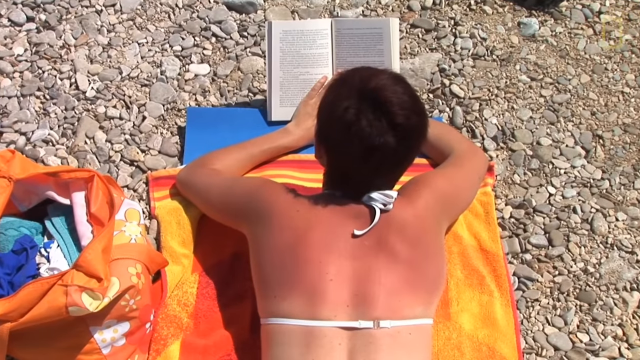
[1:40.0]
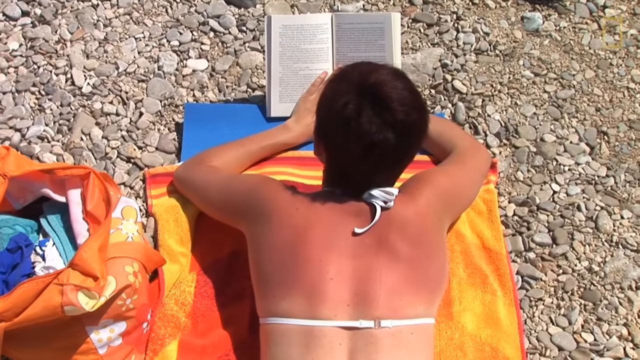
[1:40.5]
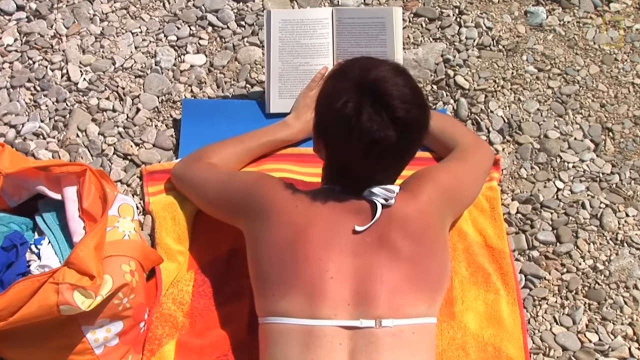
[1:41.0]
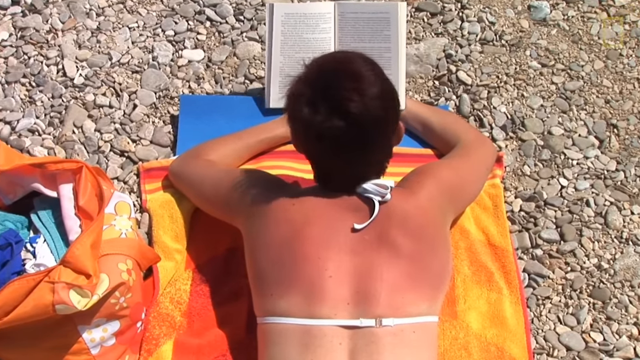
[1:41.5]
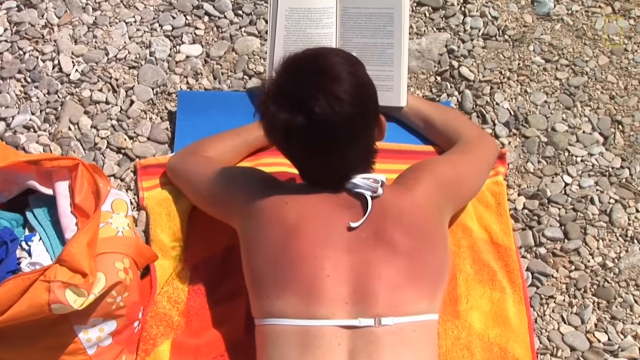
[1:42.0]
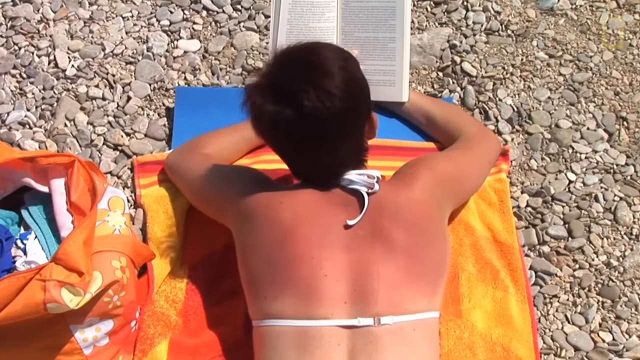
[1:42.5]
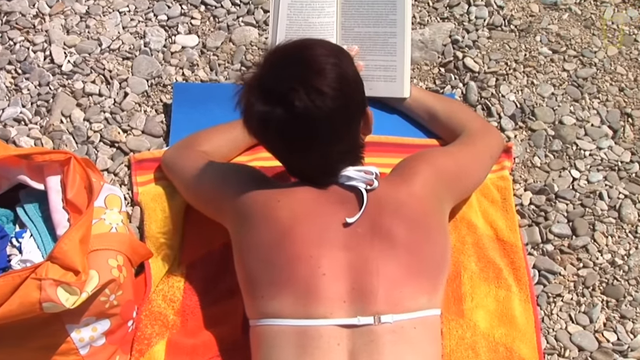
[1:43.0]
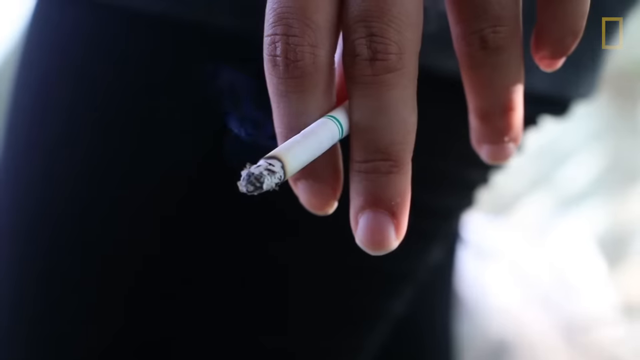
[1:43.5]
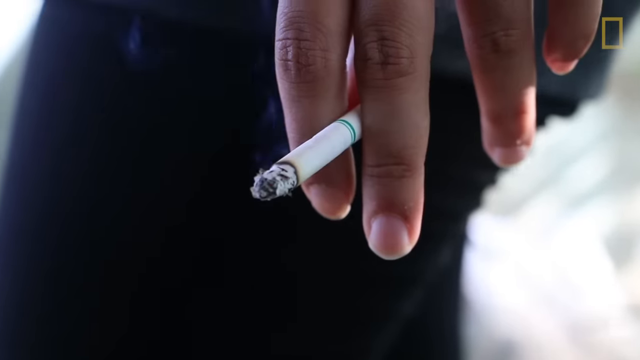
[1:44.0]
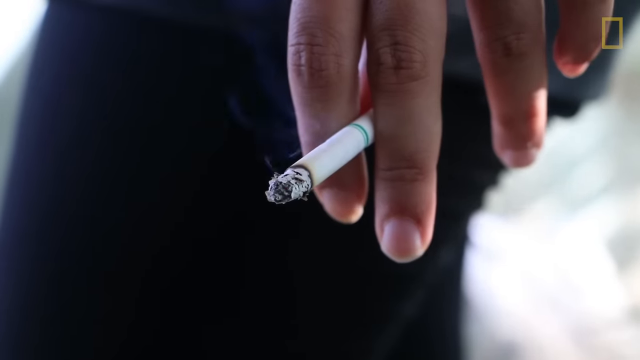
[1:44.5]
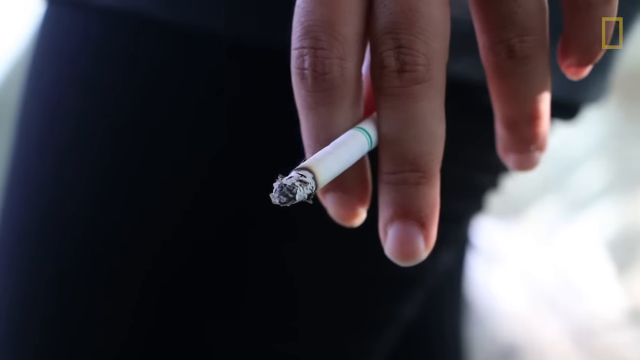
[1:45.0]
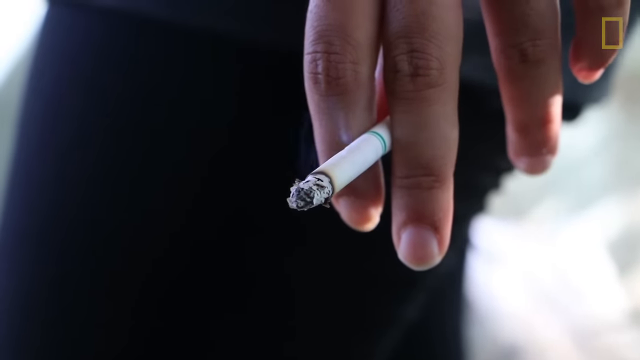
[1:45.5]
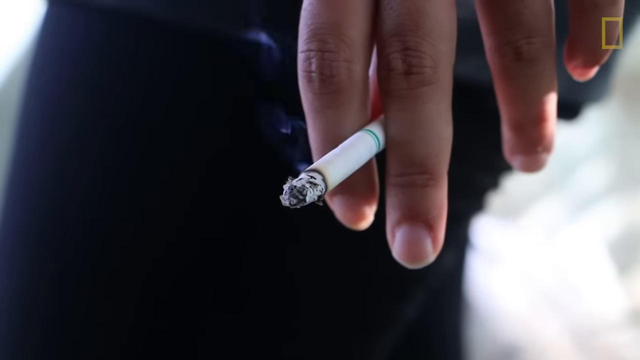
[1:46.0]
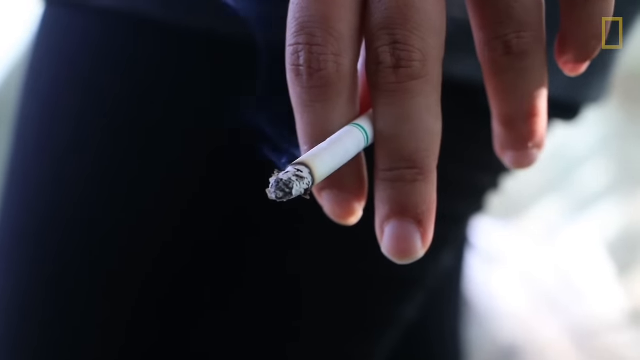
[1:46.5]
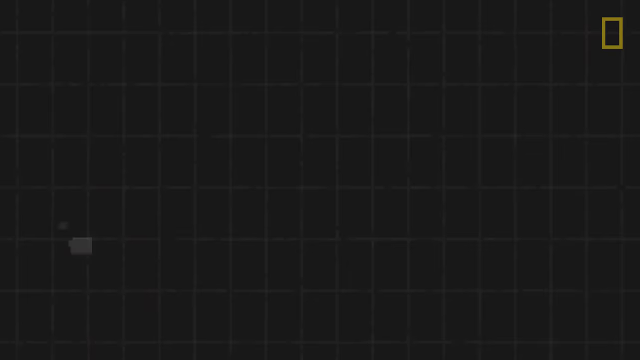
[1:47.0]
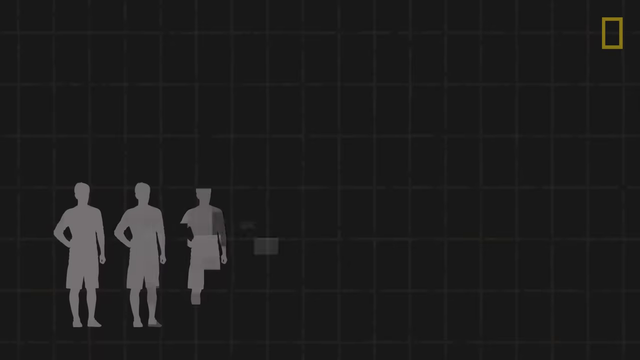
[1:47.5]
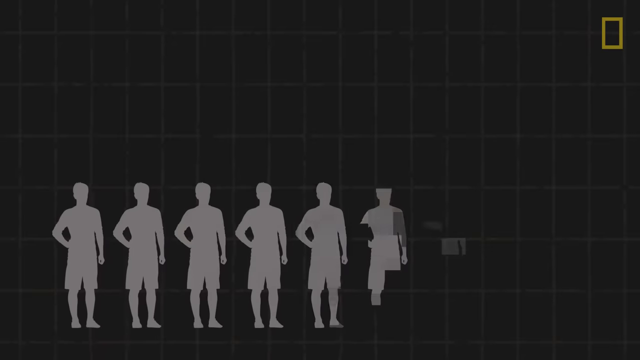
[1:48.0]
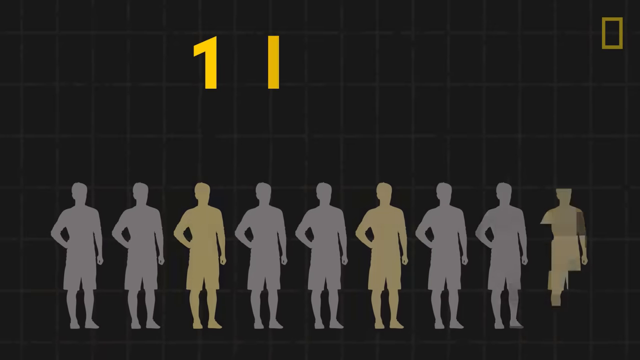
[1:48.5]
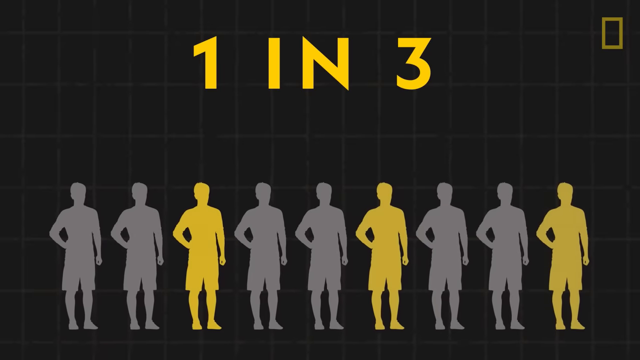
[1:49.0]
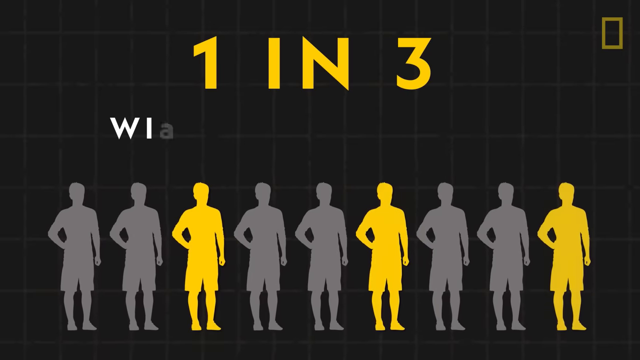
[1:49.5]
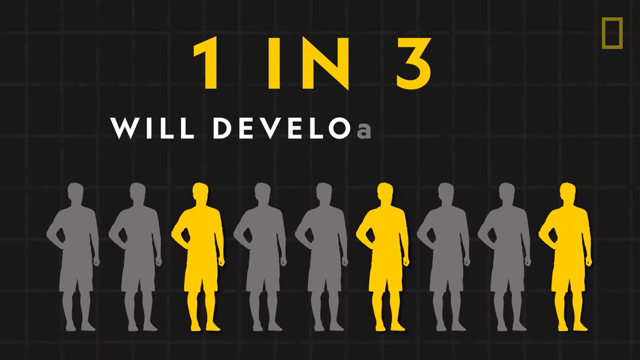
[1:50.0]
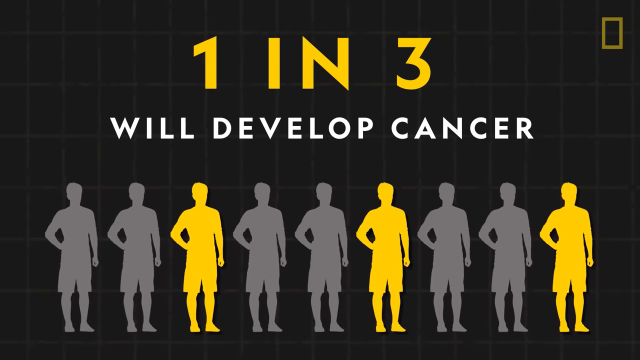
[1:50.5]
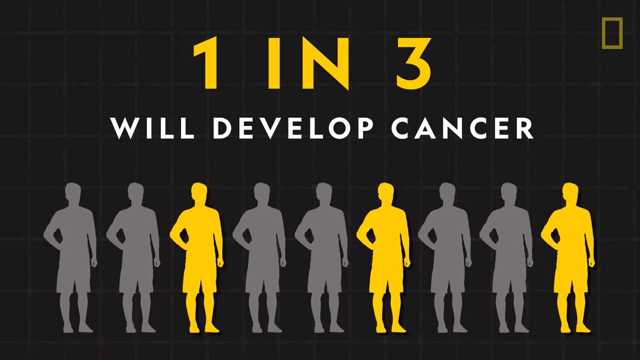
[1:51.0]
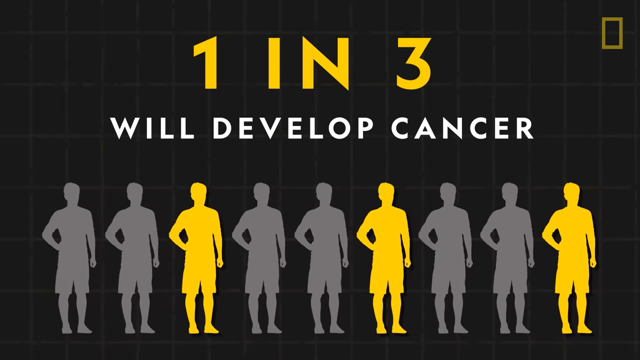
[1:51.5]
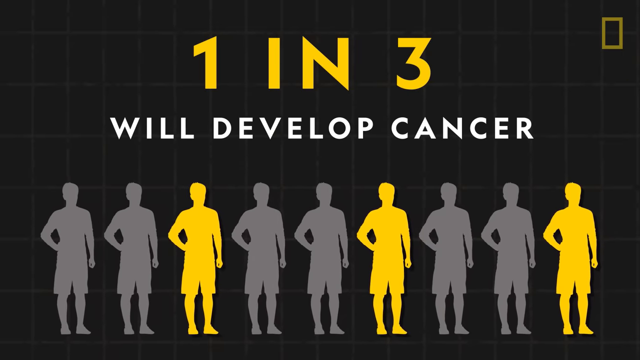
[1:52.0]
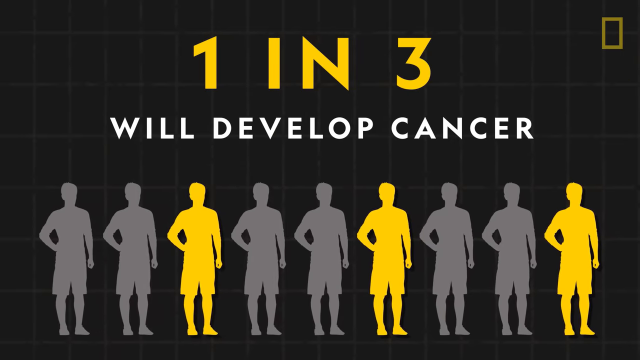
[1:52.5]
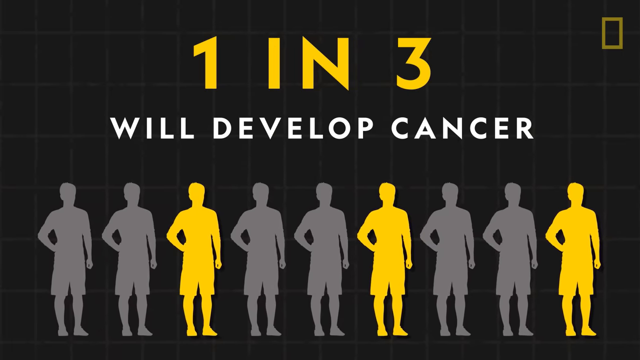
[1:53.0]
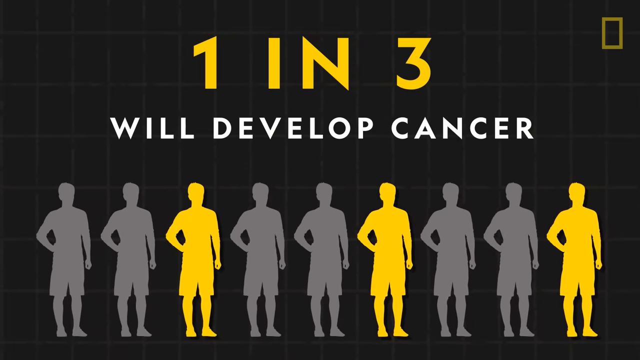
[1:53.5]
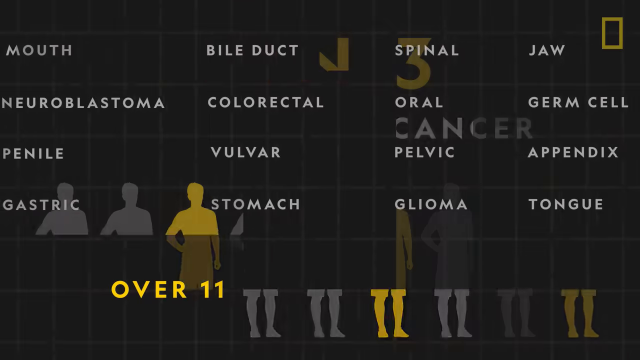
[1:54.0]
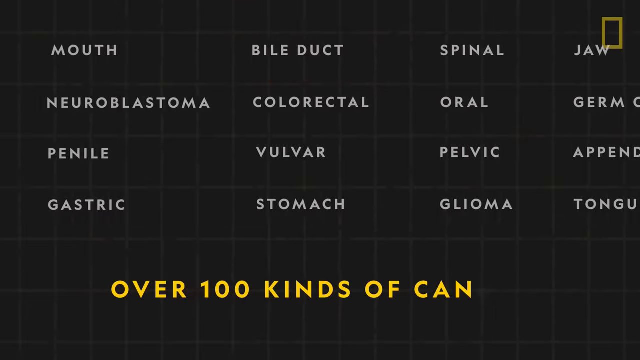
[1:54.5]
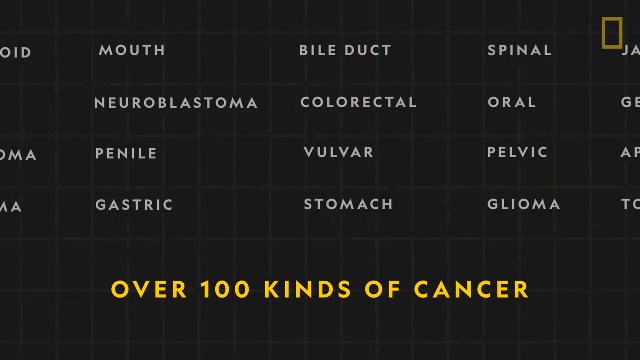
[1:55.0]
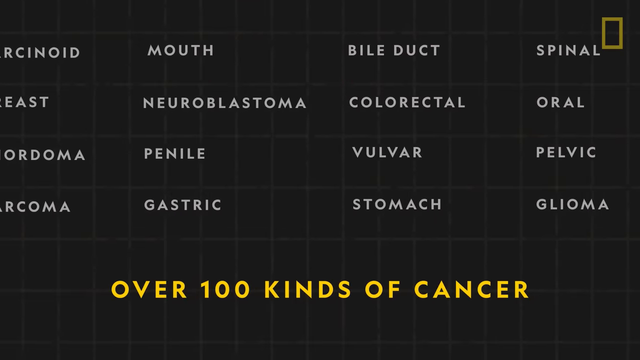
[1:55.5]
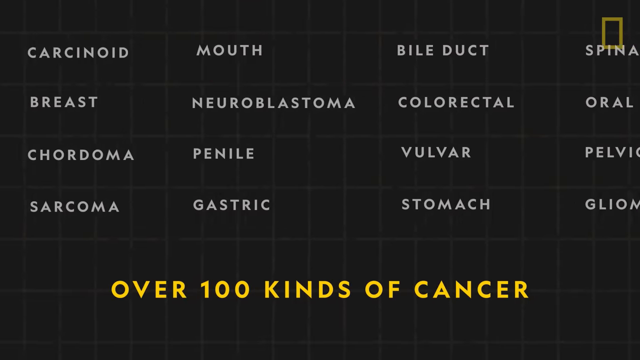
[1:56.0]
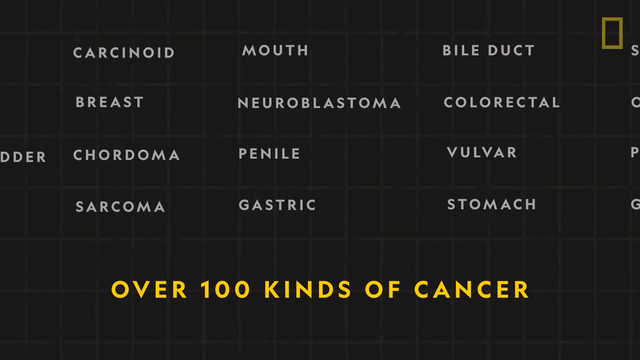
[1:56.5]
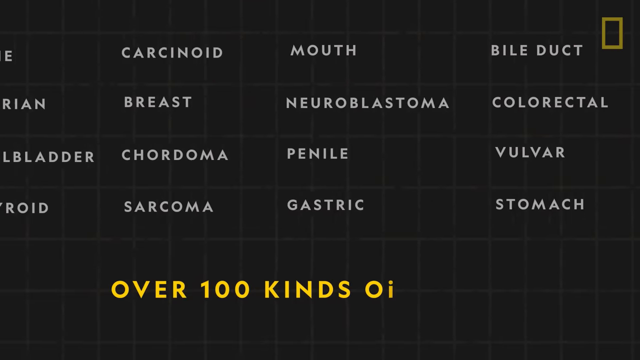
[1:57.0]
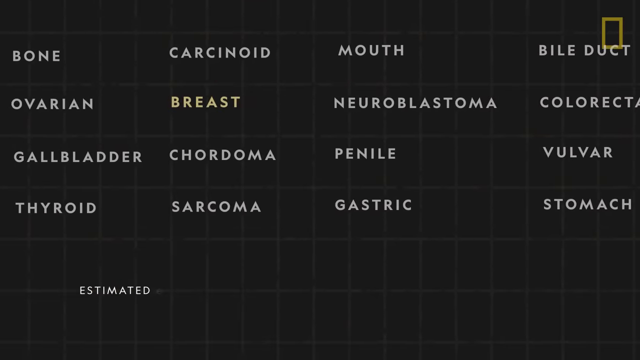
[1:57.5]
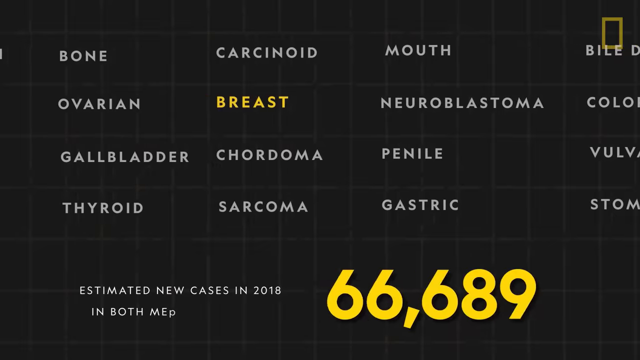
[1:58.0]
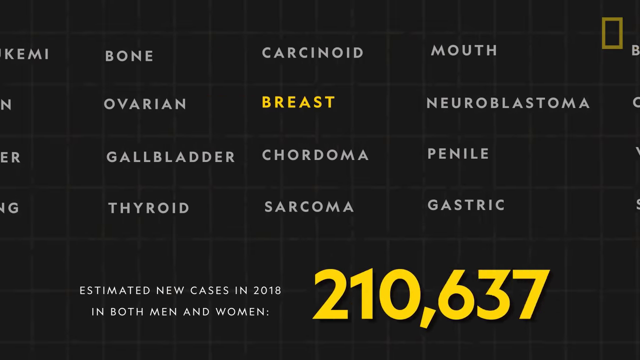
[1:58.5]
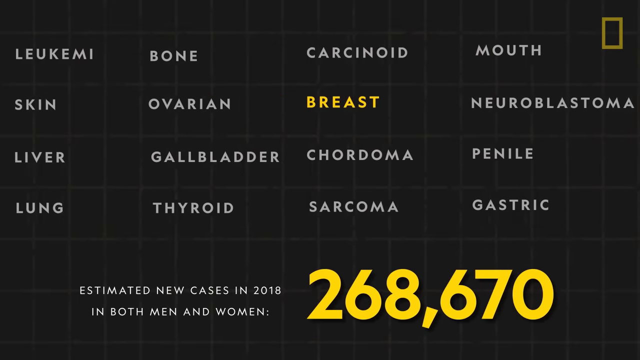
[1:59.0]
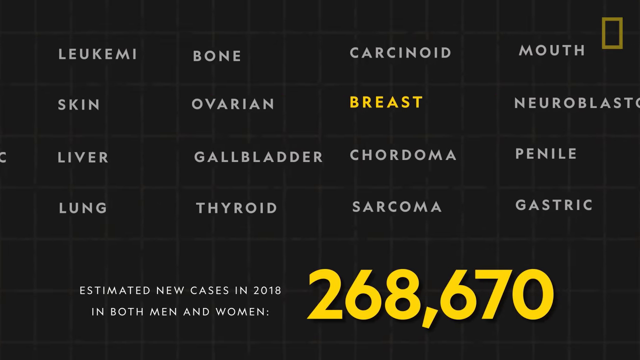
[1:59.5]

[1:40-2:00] The person sunbathing on the beach tilts their head to the left as they look to the right, continuing to read the book in front of them. They are lying on their stomach, so their back, shoulders, arms and the back of their head are visible. The scene shifts to video of someone smoking a cigarette: only their fingers, hands and part of a leg are seen, with the cigarette held between two fingers and smoke rising from the lit end. Next is a black screen with a light grid, where nine light gray silhouettes of people appear one at a time in a row toward the bottom; three of the nine appear in yellow. The text above reads "one in three will develop cancer." Then a new screen has a title at the bottom reading "over 100 kinds of cancer," with columns of words for types of cancer above, such as mouth, gastric, stomach, pelvic, spinal, carcinoid and sarcoma. The title below shifts to the number "268,670," and text reads "estimated new cases in 2018."